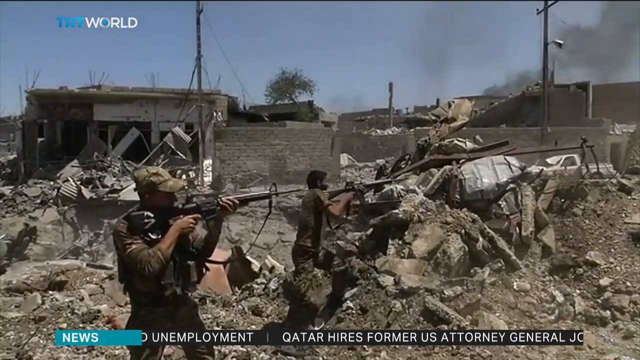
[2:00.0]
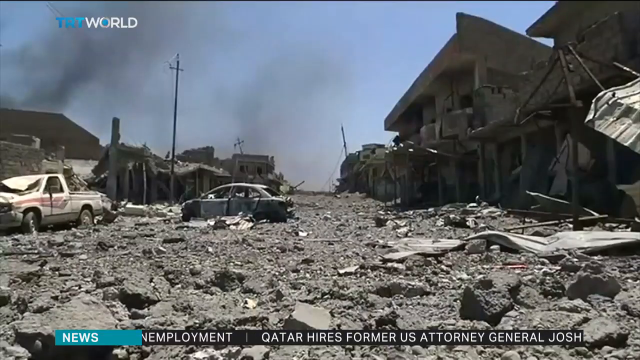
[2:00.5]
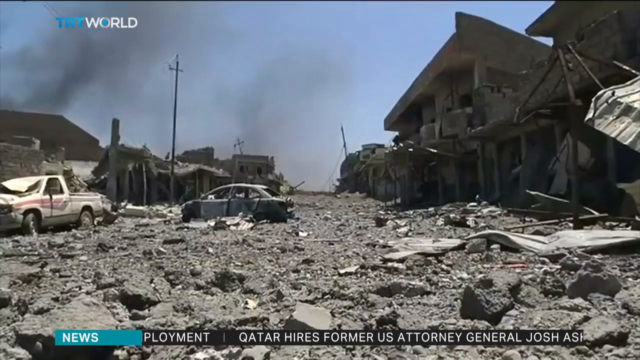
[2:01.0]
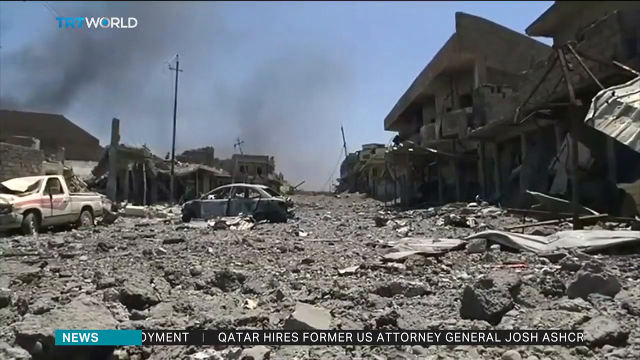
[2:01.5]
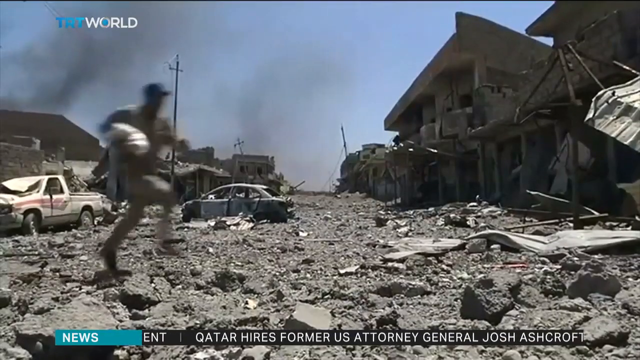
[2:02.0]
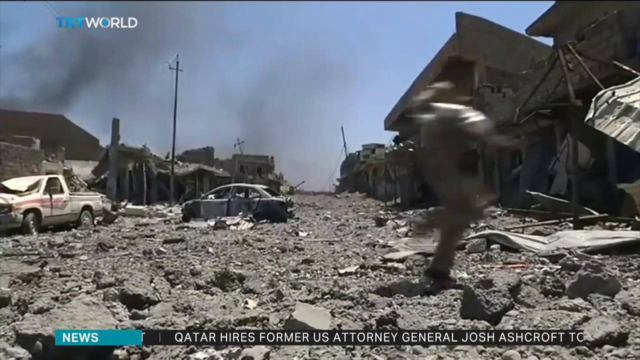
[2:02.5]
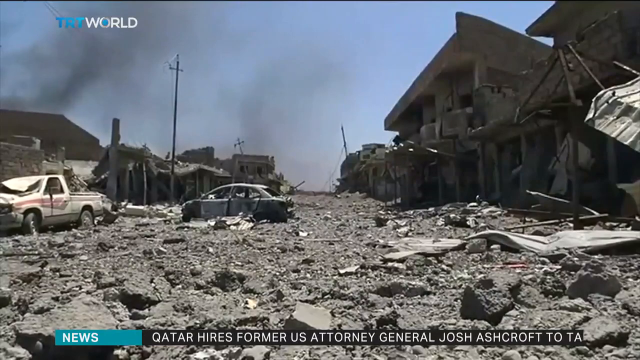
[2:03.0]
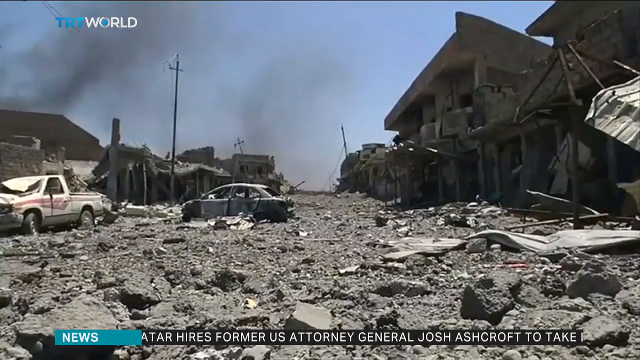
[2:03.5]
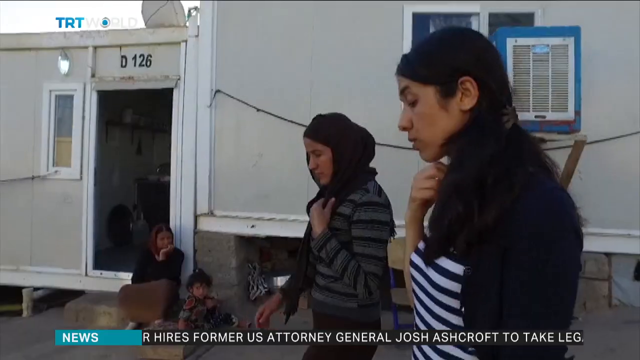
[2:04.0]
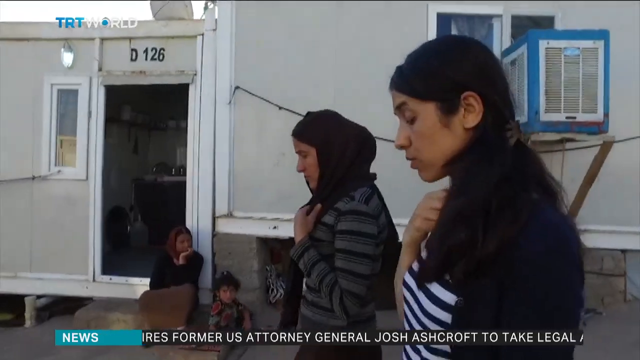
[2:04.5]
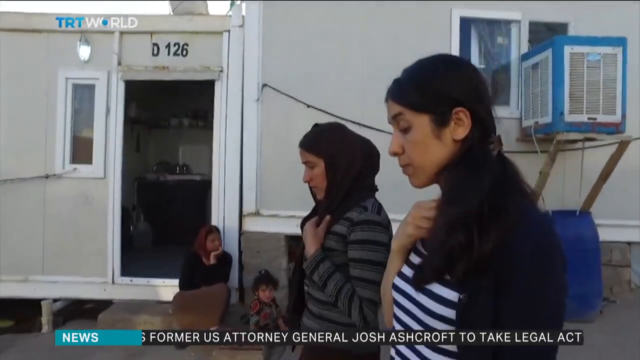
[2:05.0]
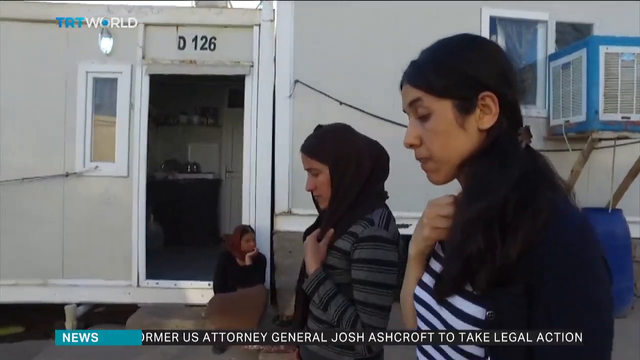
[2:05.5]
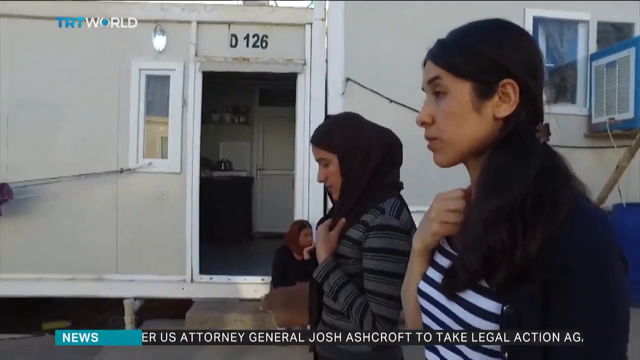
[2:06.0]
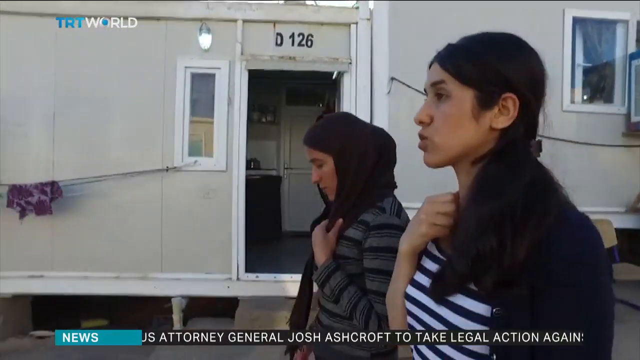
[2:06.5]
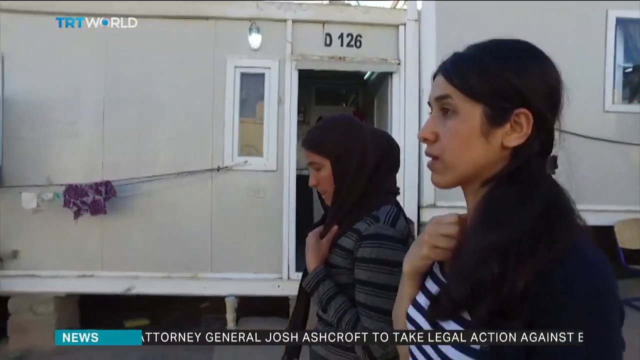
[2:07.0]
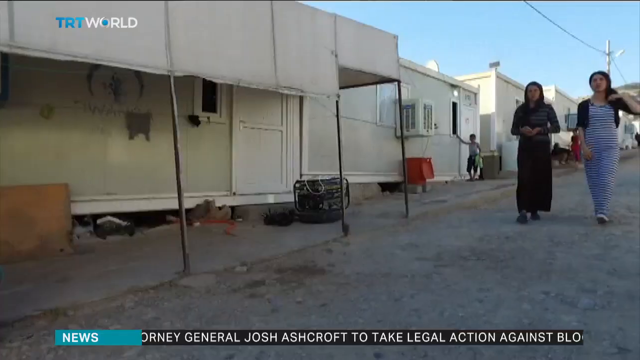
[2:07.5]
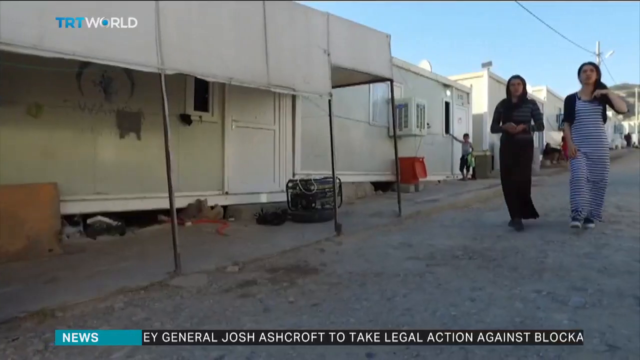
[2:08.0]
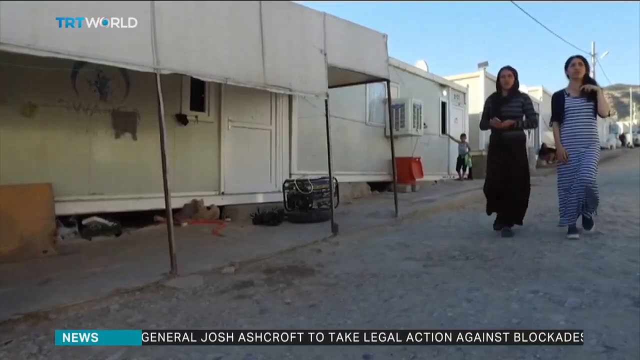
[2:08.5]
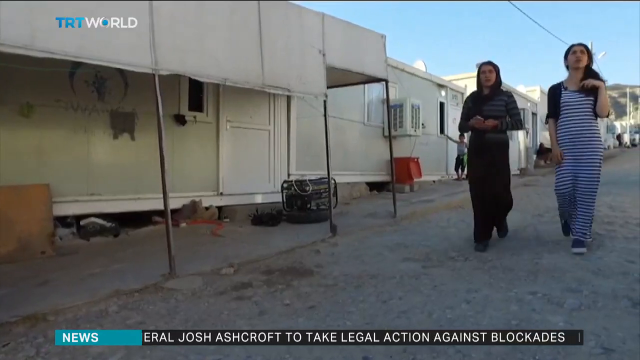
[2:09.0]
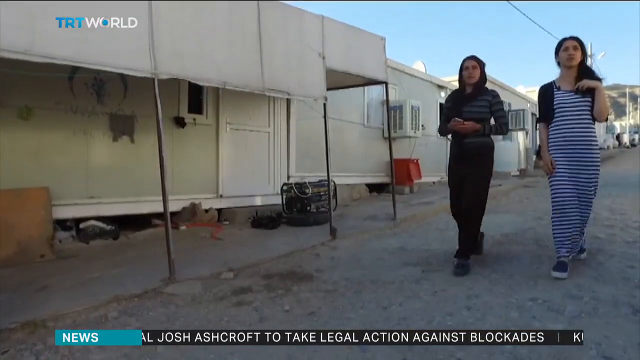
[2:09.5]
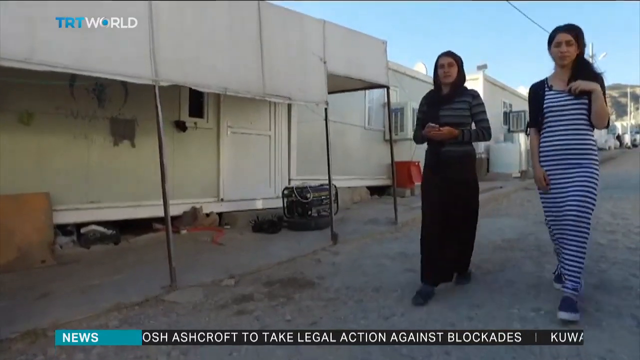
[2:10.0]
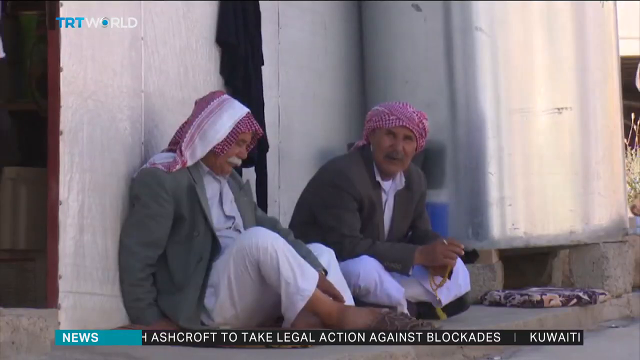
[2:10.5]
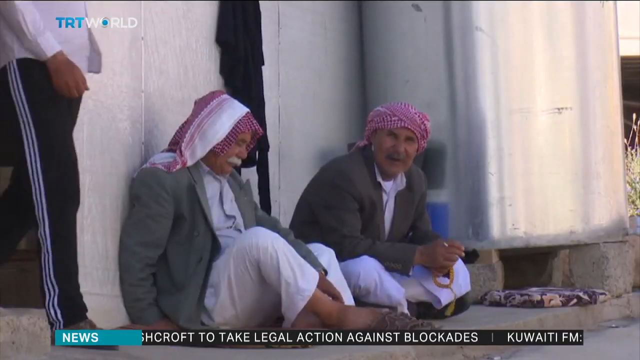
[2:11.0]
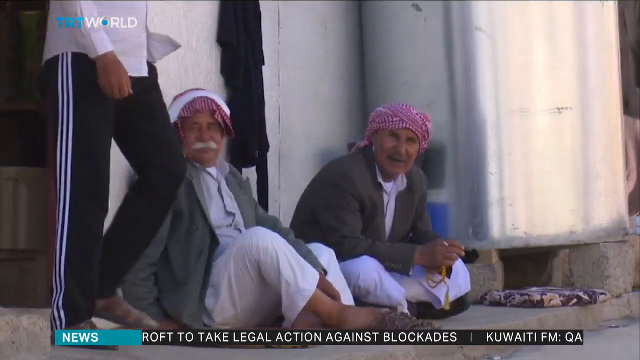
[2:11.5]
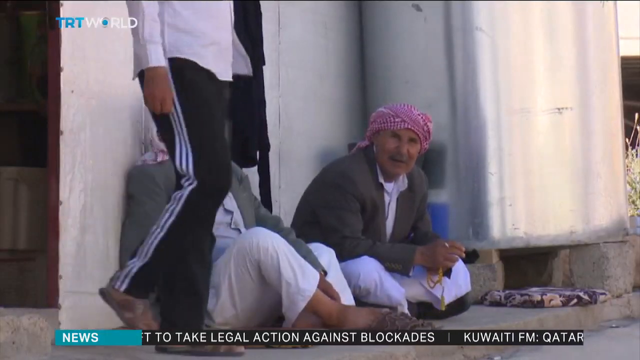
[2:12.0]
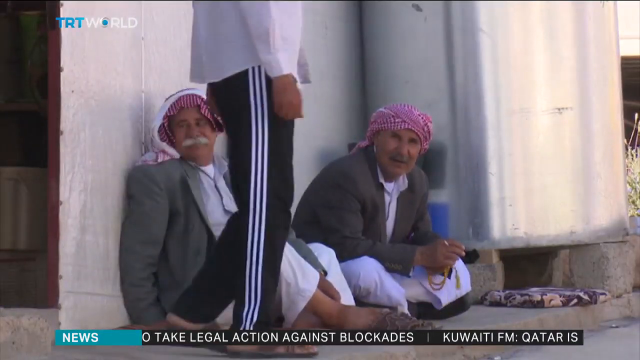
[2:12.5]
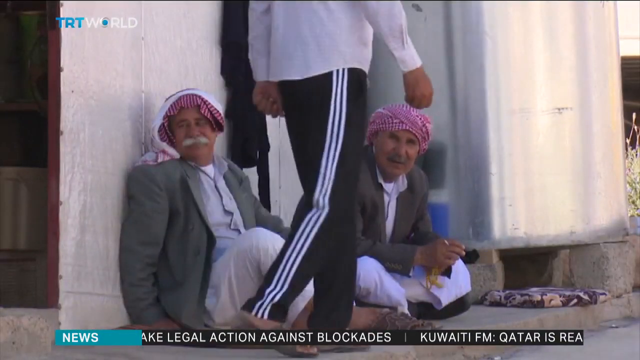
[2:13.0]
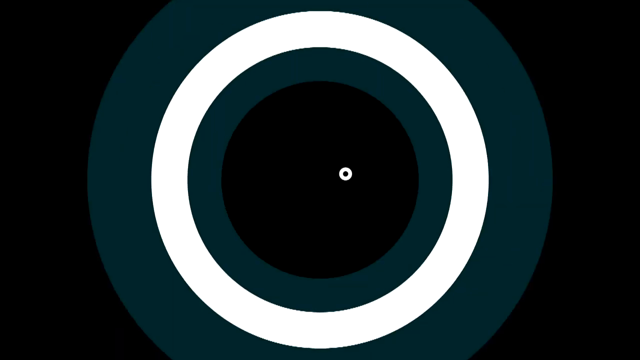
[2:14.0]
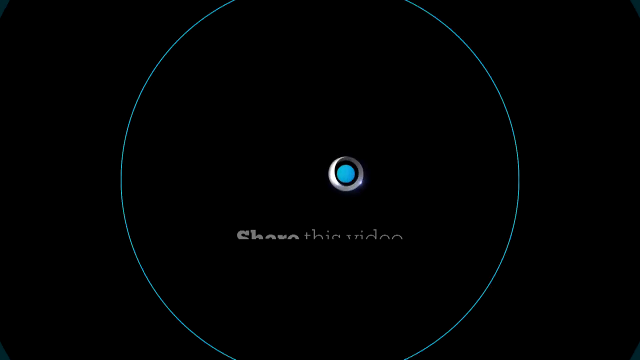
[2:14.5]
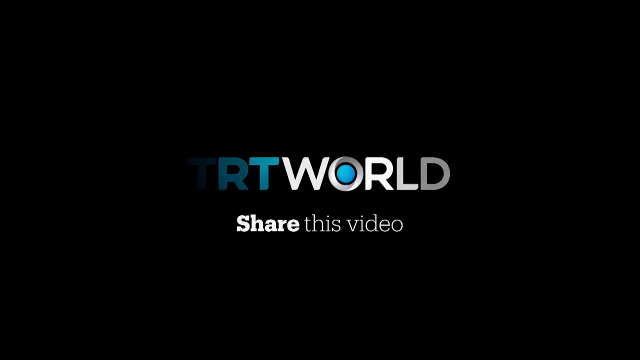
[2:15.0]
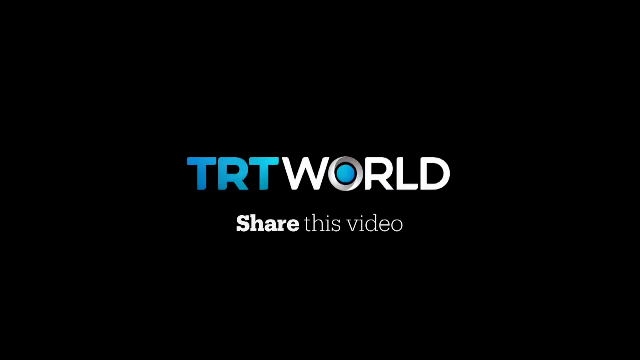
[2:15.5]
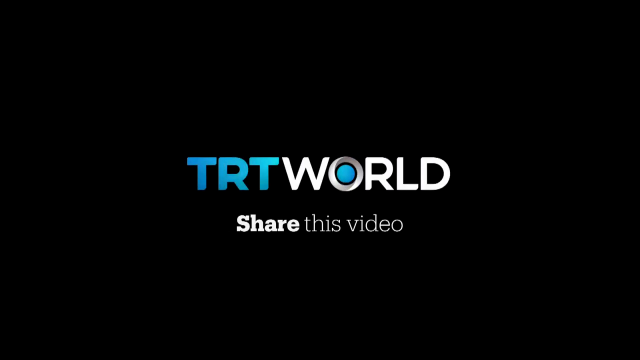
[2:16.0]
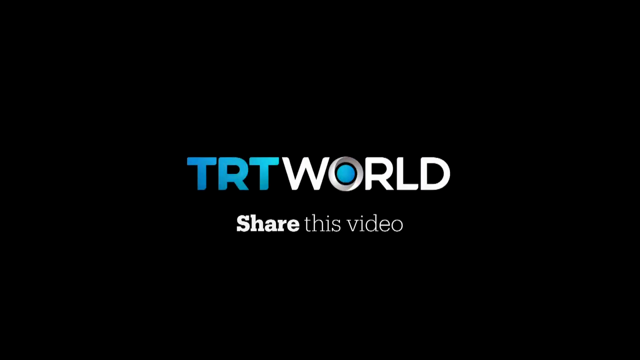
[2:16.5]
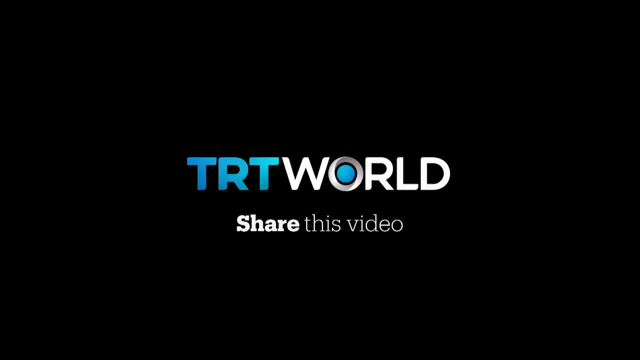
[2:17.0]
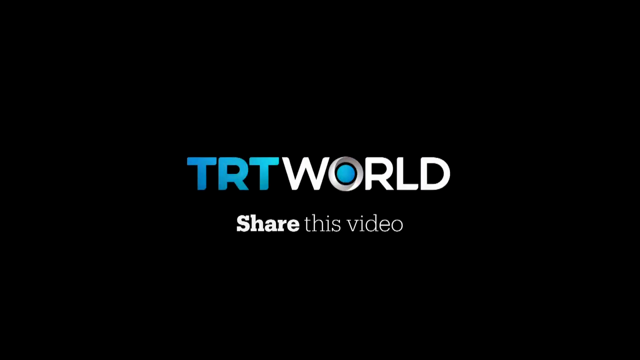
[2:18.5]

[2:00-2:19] Debris fills the view as a person runs across the screen. There are destroyed cars and lots of rubble, and everything looks gray and drab. Two elderly men with mustaches sit outside on the sidewalk, wearing gray attire and red and white or hot pink and white head wraps; one of them appears not to be wearing shoes. Nadia Murad walks through the city looking at how everything has been destroyed. Smoke rises in the background, and the sky is gray and dreary. As they walk down the street, a baby sits with his mother. Everyone looks despairing and tired, though Nadia looks a bit better than she did at the beginning of the video.